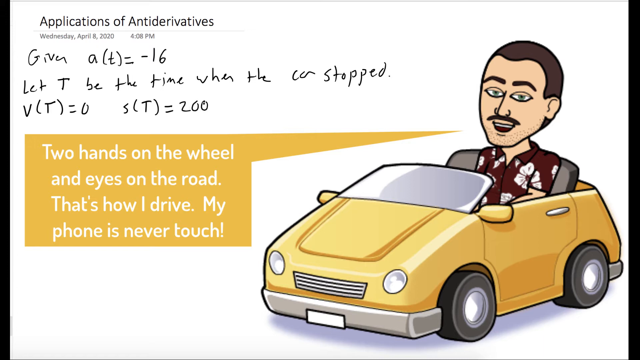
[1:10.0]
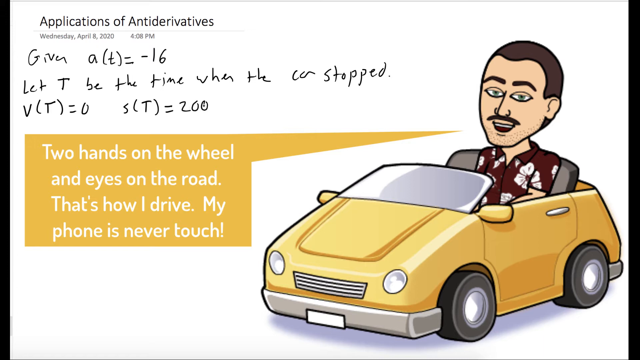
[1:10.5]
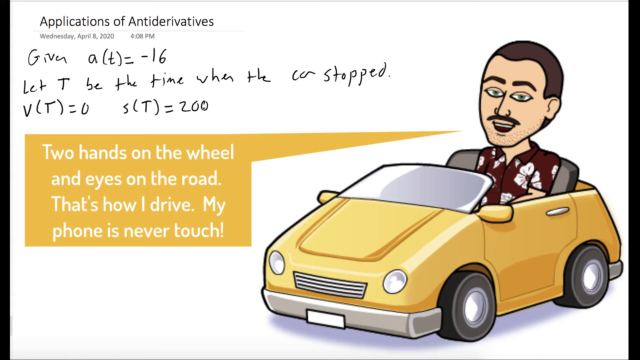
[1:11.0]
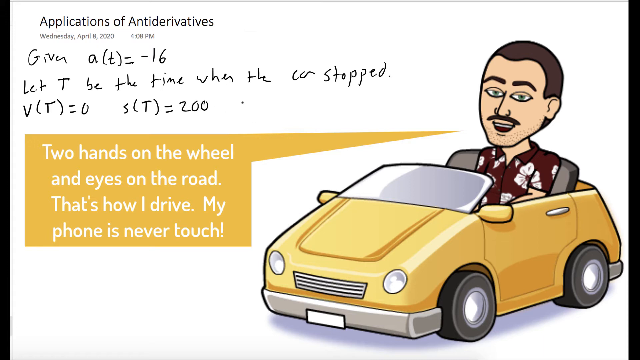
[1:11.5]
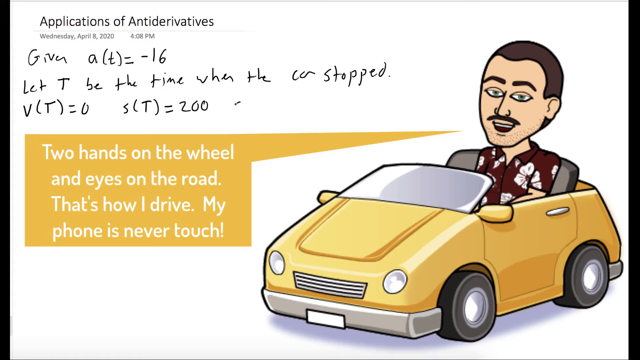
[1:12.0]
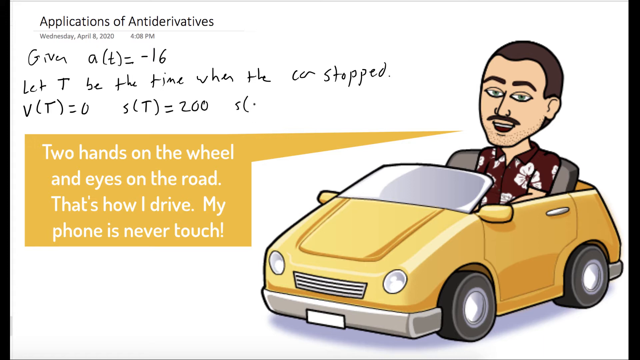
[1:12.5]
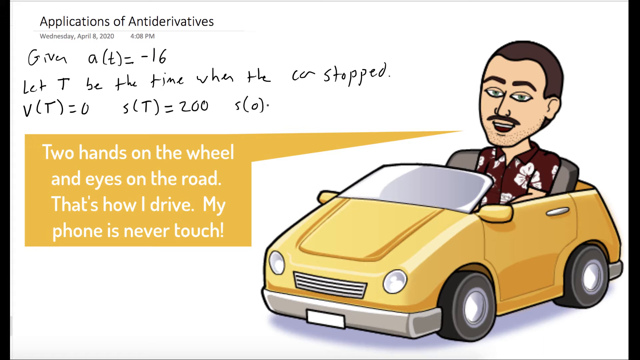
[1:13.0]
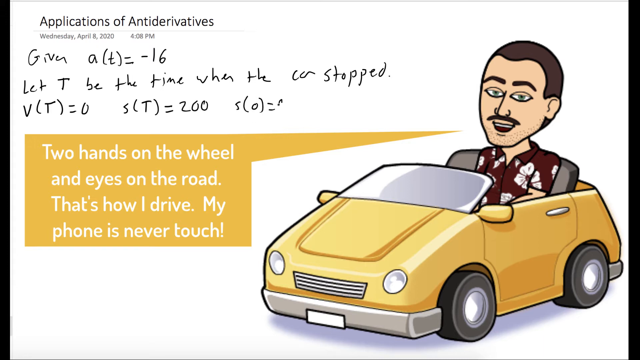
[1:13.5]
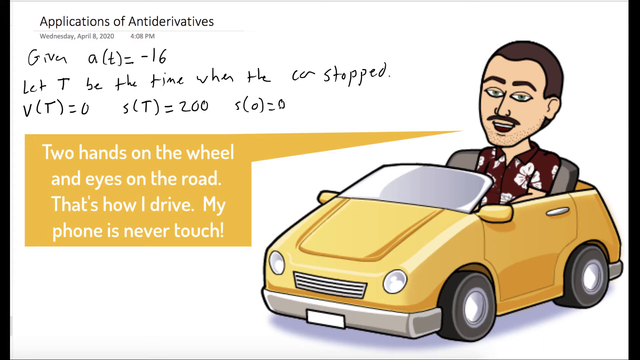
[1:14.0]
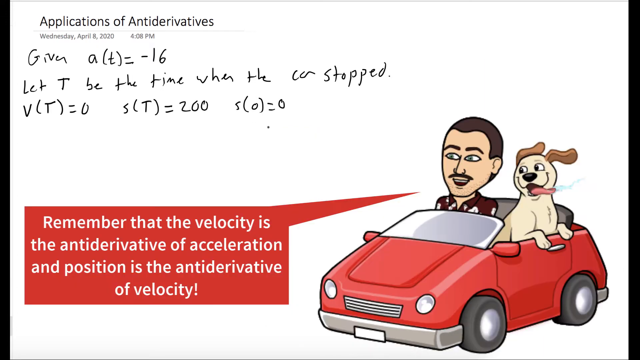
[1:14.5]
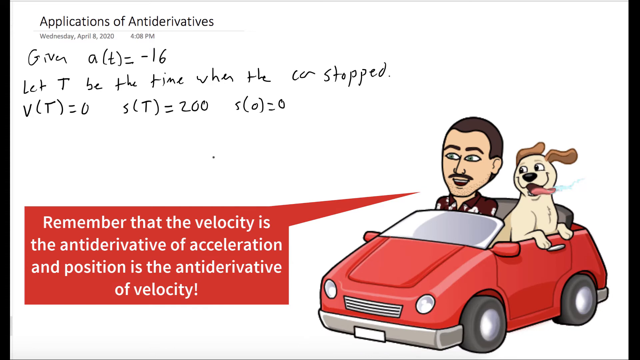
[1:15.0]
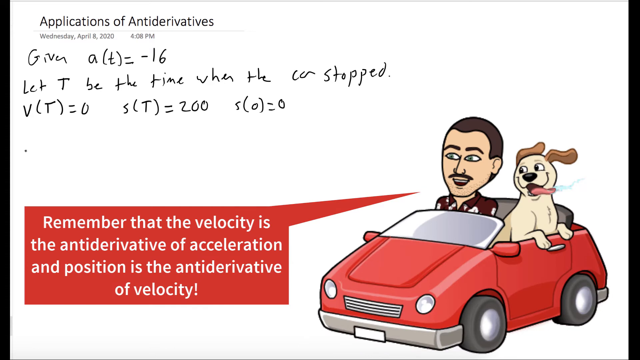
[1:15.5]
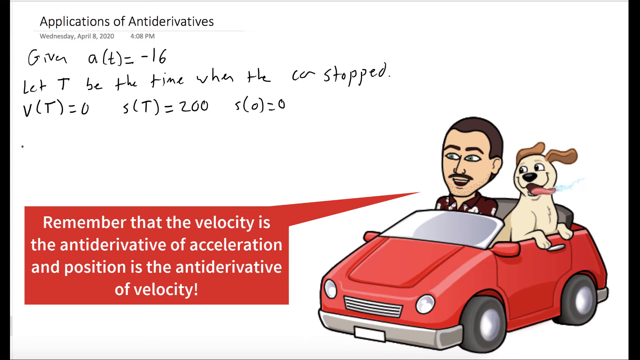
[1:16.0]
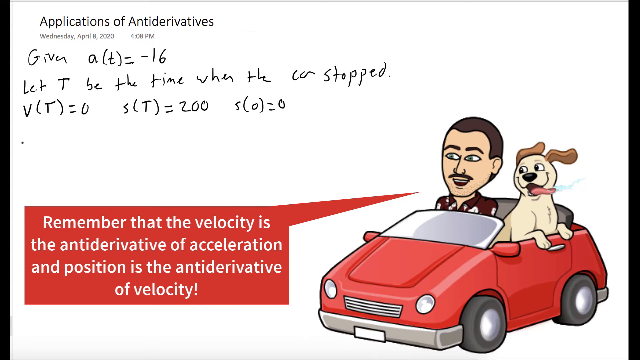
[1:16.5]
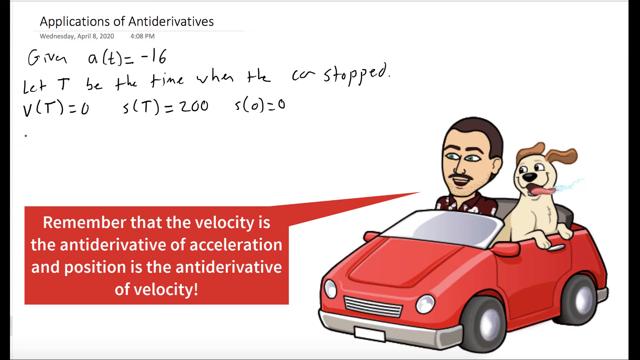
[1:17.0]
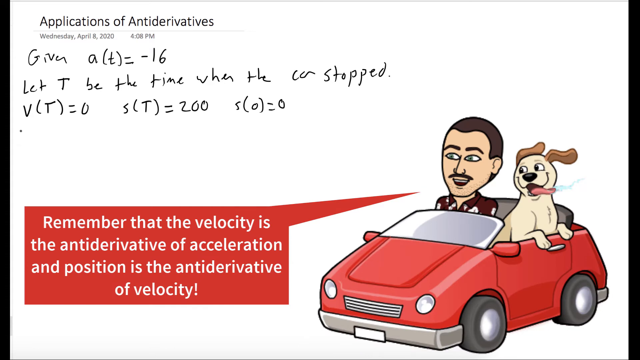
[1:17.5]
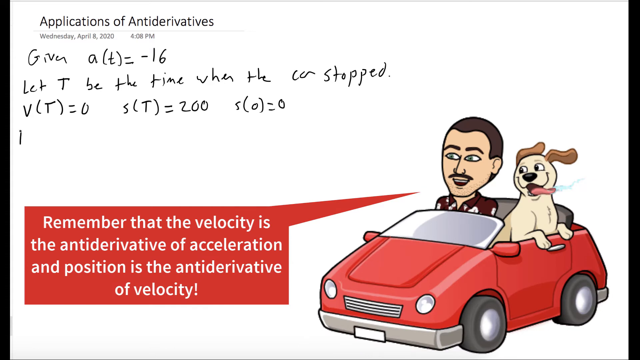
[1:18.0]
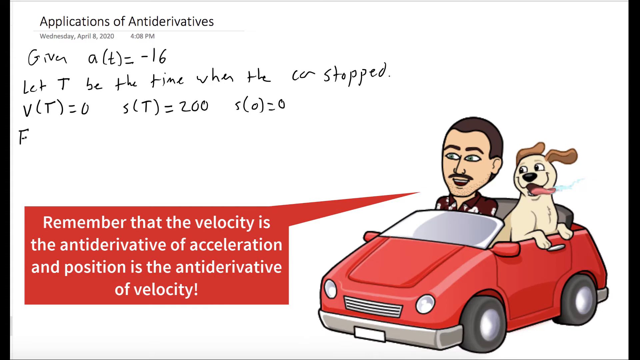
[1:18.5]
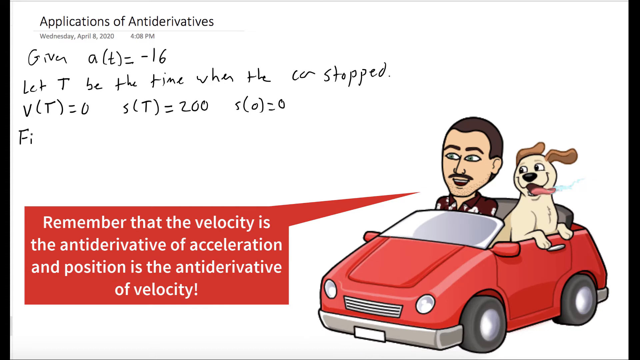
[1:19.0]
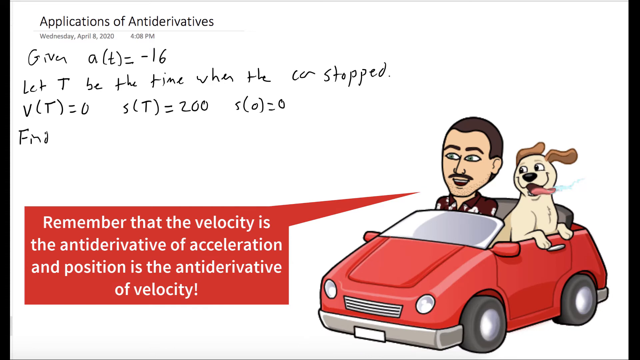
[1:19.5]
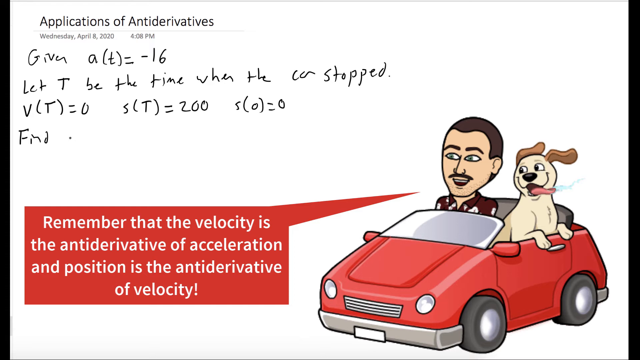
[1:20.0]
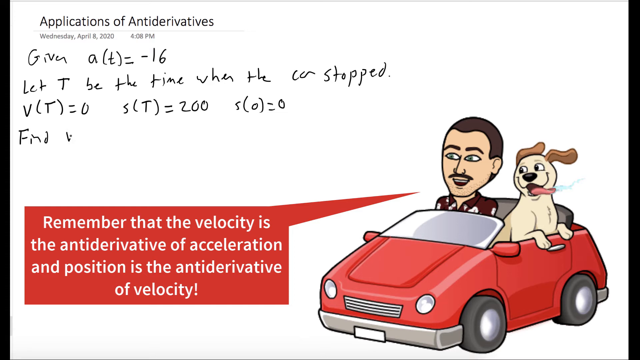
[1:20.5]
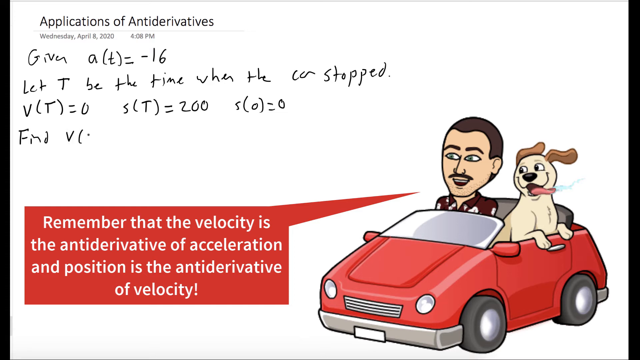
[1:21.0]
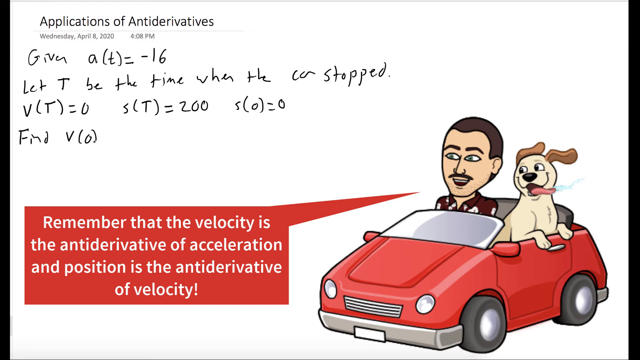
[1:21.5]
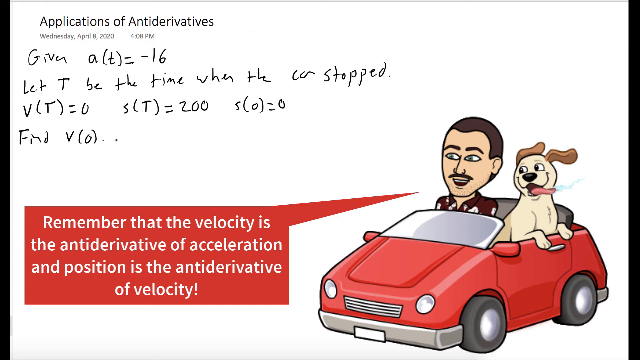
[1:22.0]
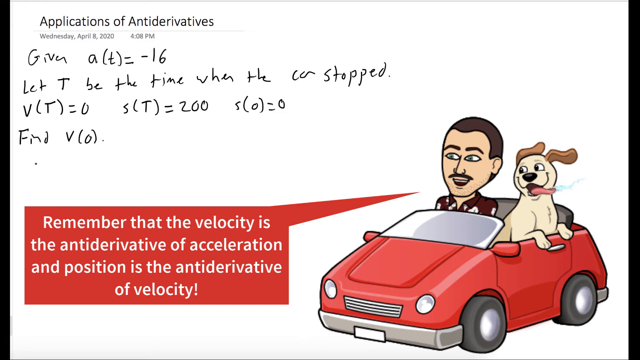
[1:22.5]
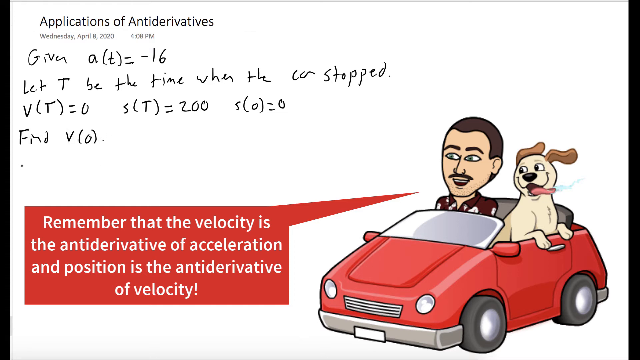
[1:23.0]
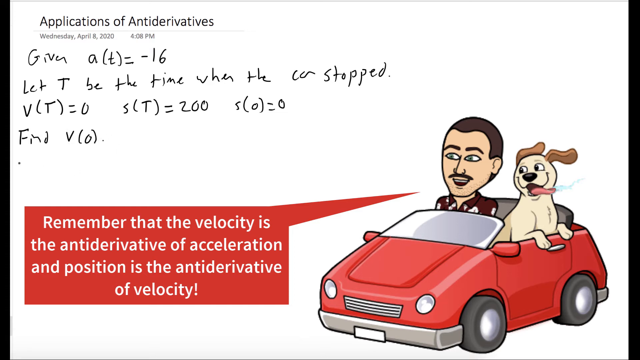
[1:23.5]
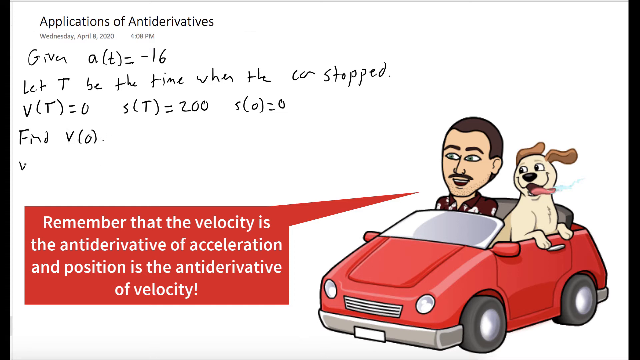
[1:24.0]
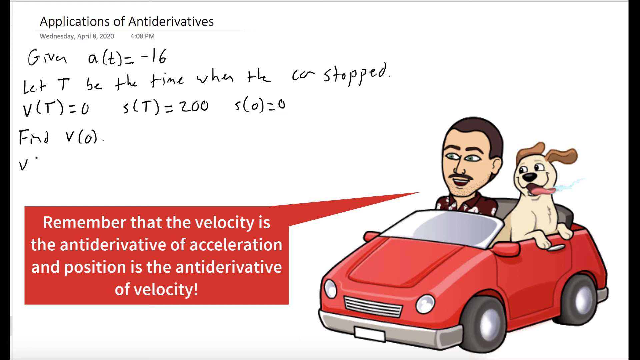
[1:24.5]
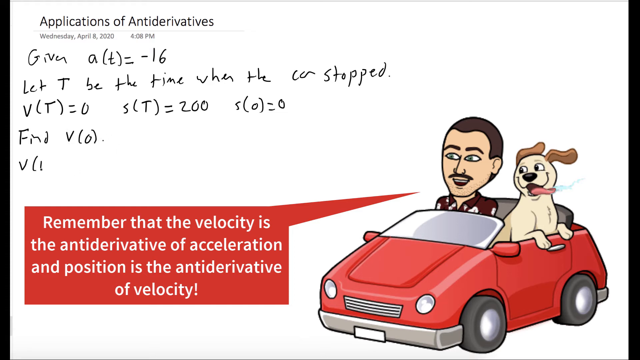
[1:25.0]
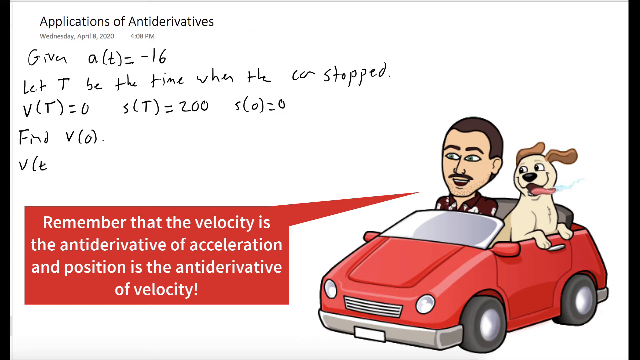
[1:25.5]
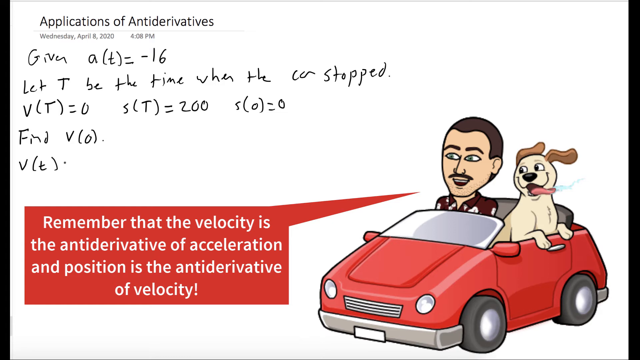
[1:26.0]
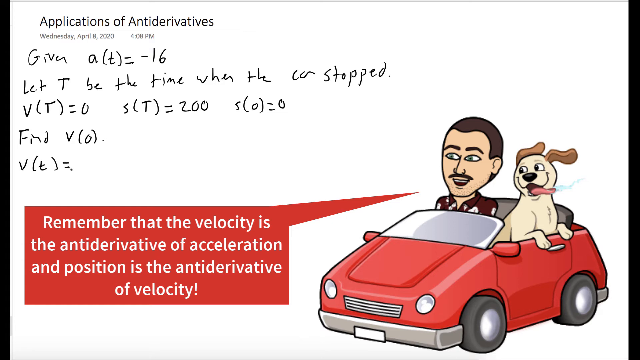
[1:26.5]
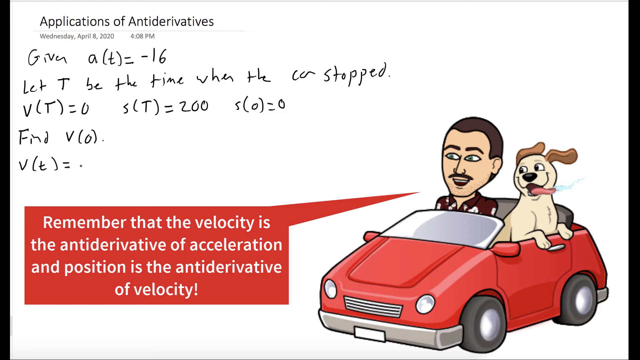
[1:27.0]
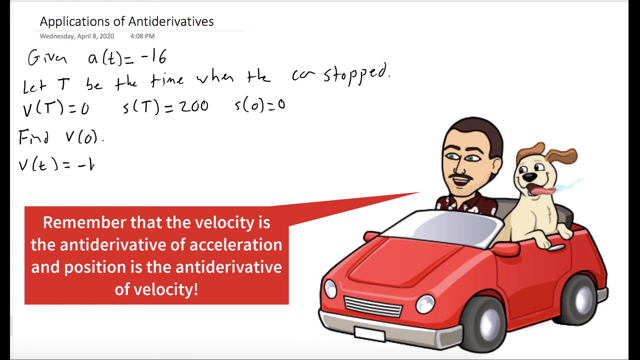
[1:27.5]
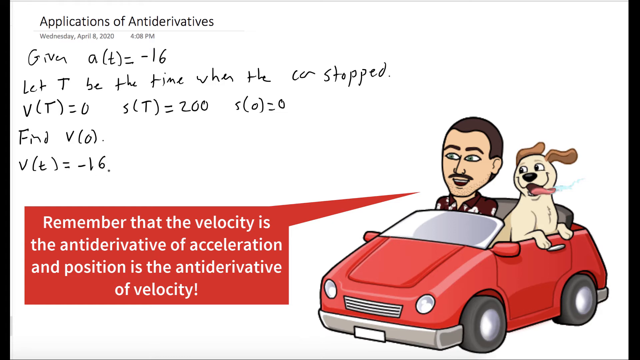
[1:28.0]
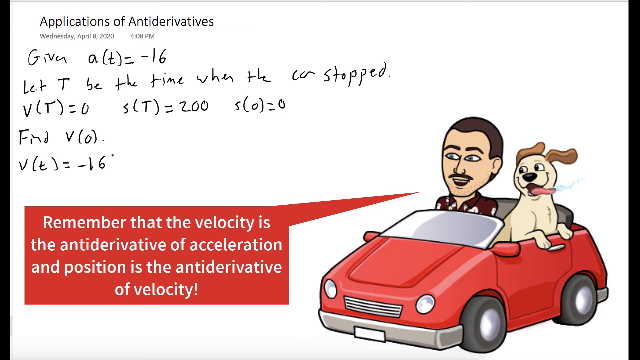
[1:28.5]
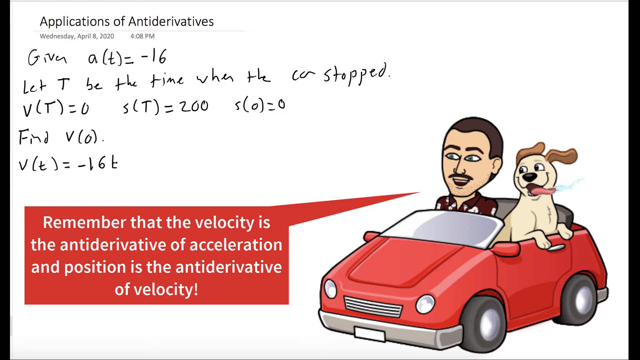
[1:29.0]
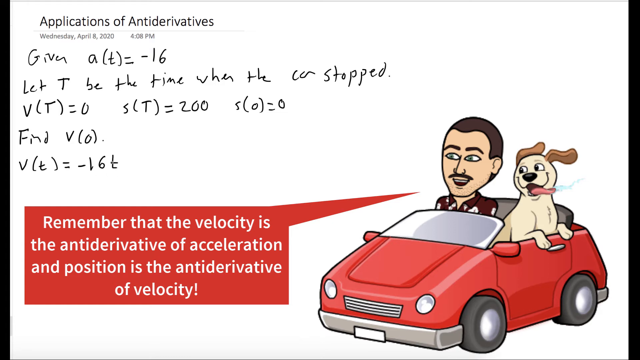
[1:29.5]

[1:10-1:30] Cursive writing continues to appear on the page, continuing the mathematical work. Underneath "let t be the time when the car stopped," it says "vt equals 0, st equals 200, s0 equals 0." The car in the illustration then changes colour to red, and a dog is now seated in the red car to the right of the man. The dog's tongue is out and its ears fly behind it as though the car is moving. The yellow speech bubble has also changed to red, and its white text says "remember that the velocity is the antiderivative of acceleration and position is the antiderivative of velocity." The cursive writing in the top left corner continues and says "find v0, vt equals minus 16 t." The handwriting seems to be done by a tiny moving cursor that looks like a dot rather than an arrow.